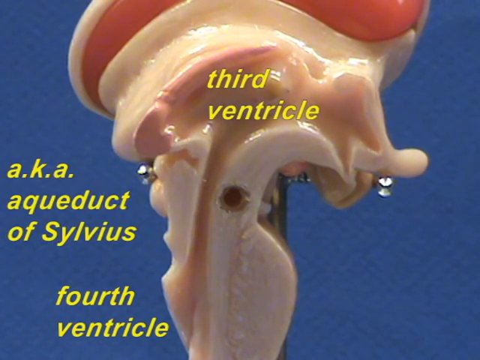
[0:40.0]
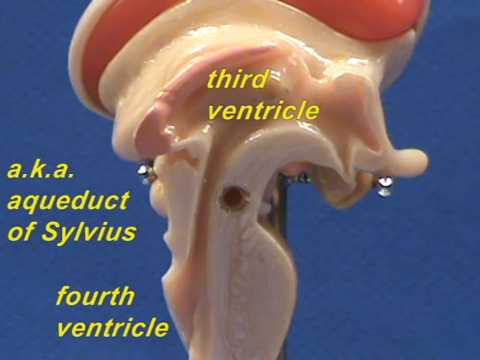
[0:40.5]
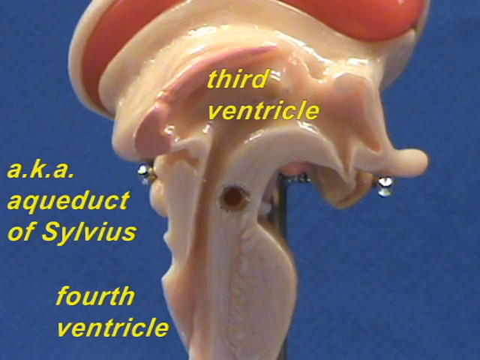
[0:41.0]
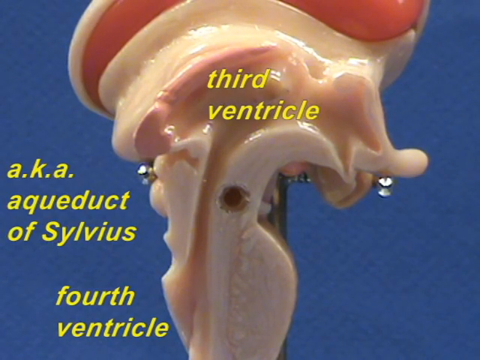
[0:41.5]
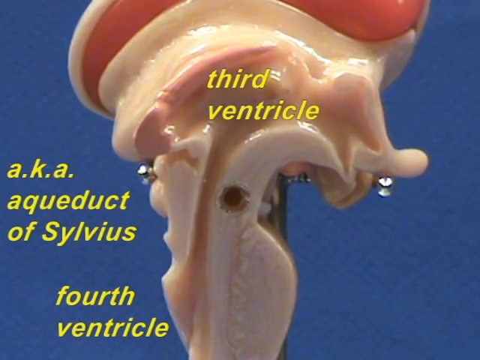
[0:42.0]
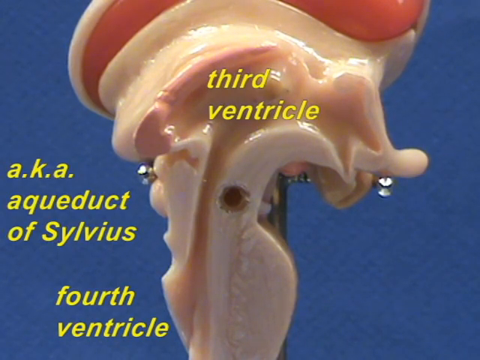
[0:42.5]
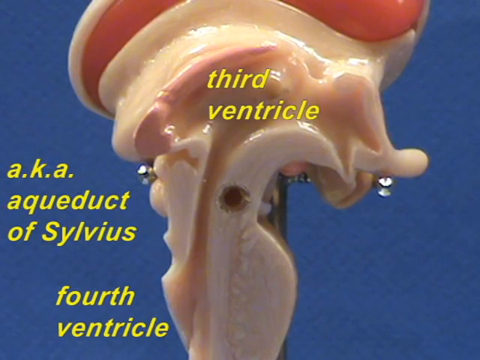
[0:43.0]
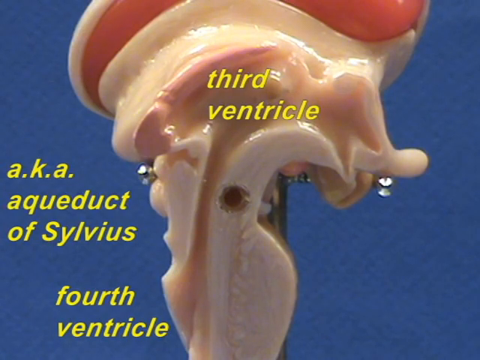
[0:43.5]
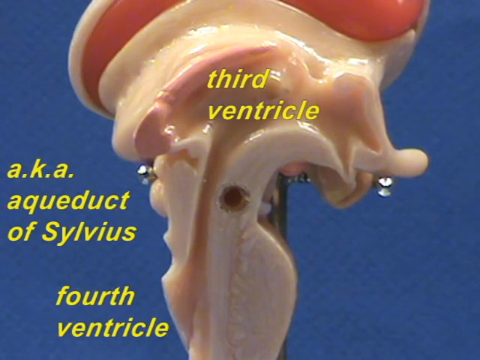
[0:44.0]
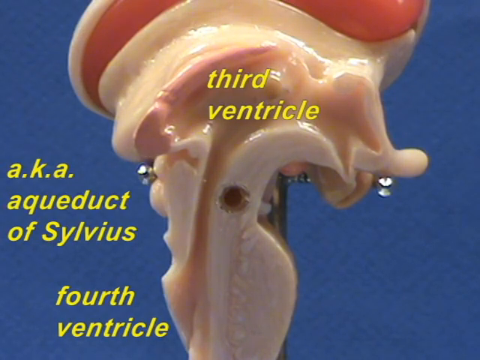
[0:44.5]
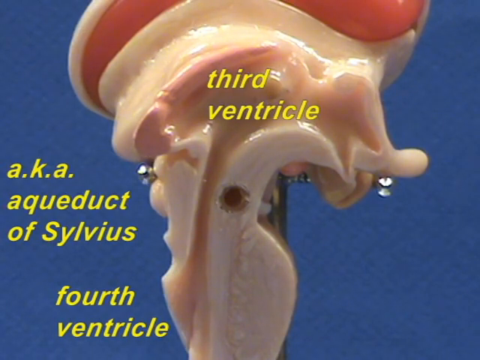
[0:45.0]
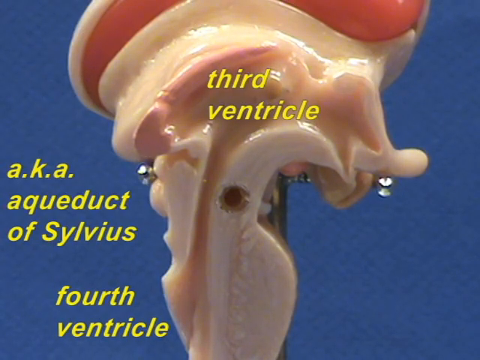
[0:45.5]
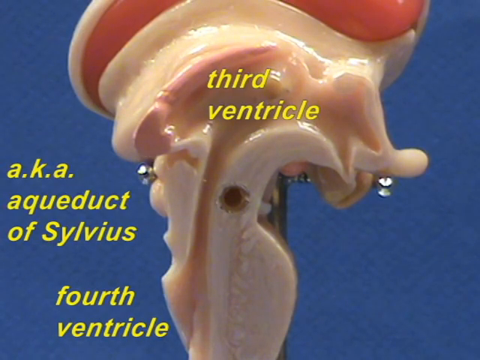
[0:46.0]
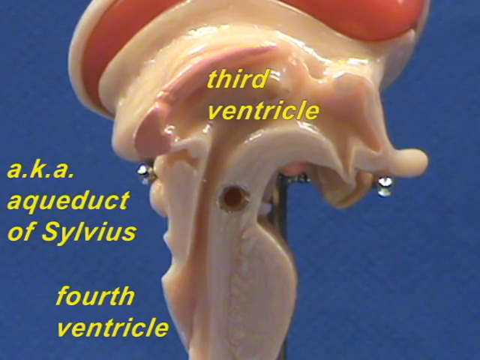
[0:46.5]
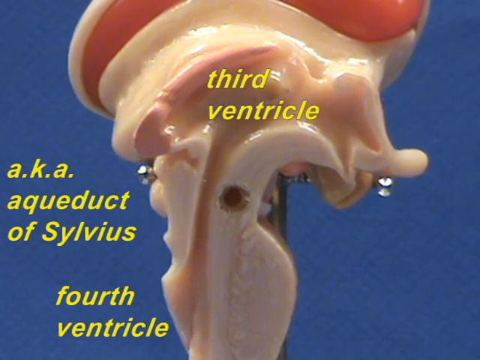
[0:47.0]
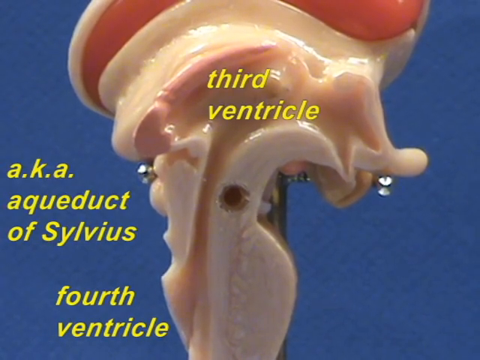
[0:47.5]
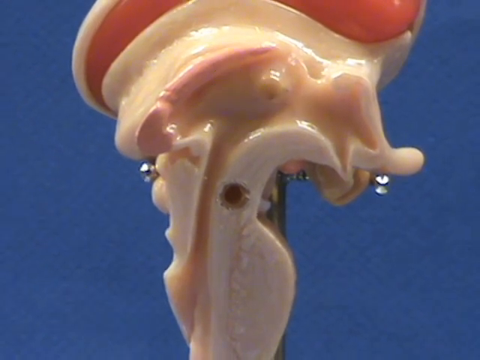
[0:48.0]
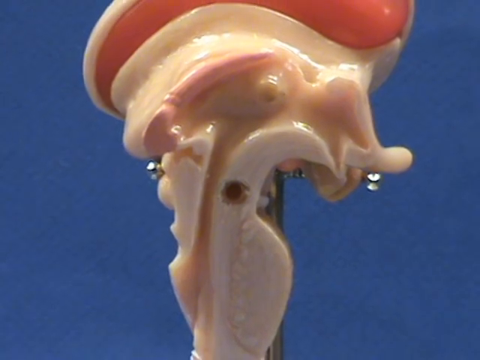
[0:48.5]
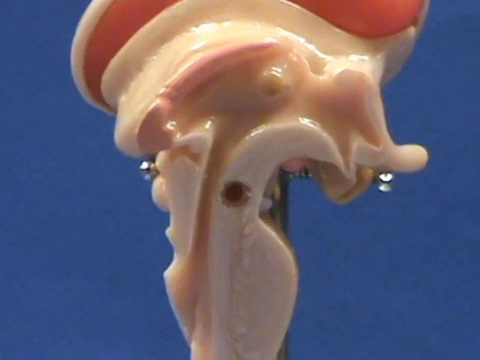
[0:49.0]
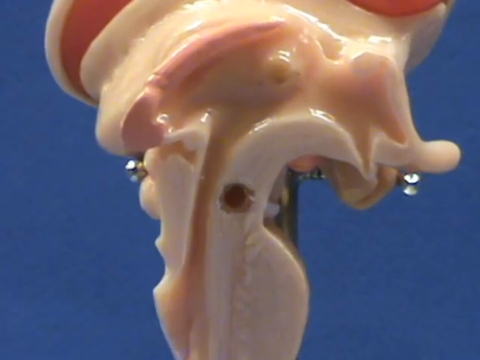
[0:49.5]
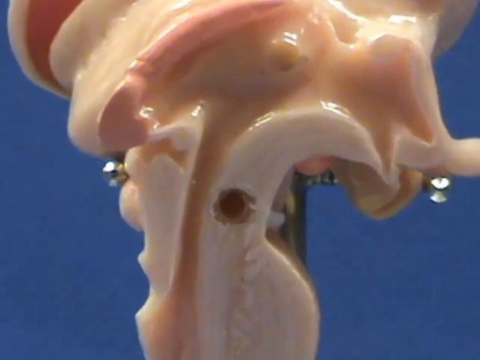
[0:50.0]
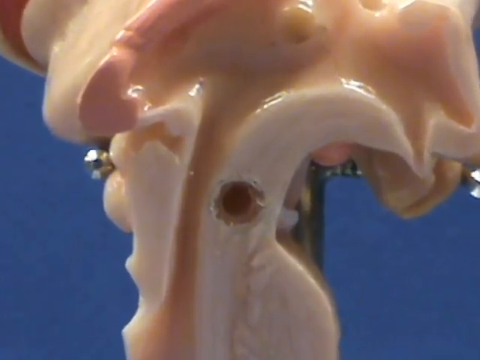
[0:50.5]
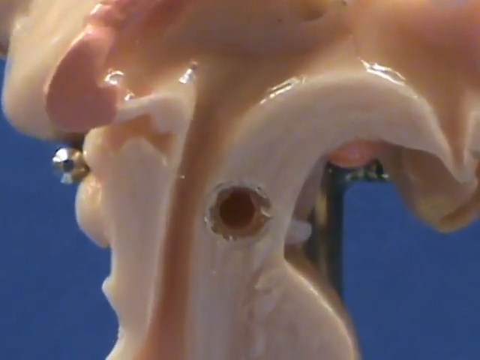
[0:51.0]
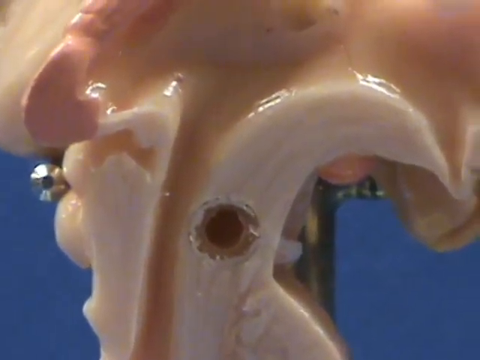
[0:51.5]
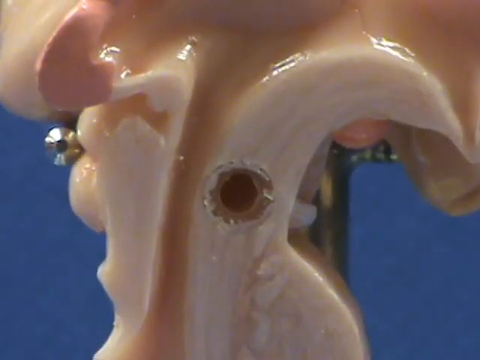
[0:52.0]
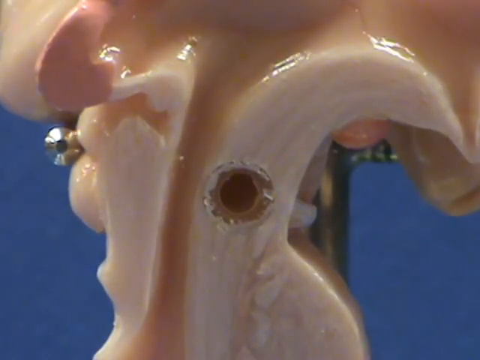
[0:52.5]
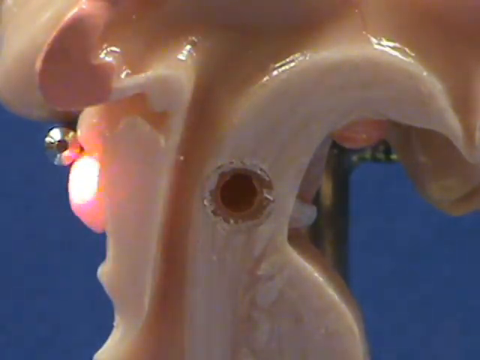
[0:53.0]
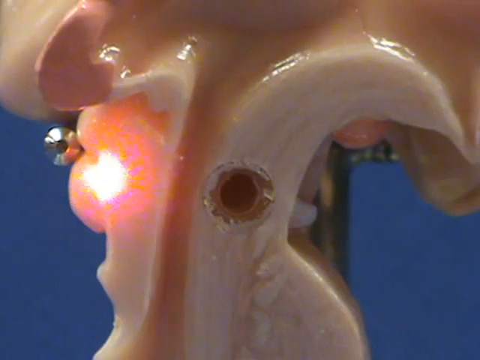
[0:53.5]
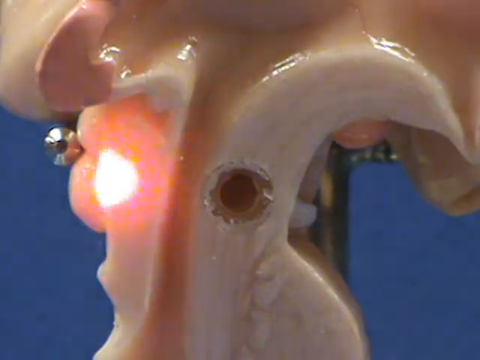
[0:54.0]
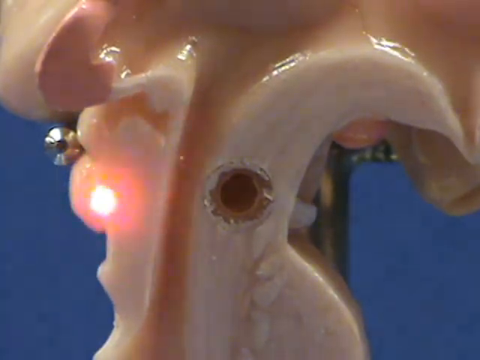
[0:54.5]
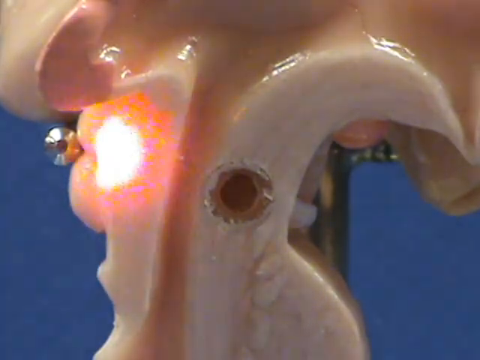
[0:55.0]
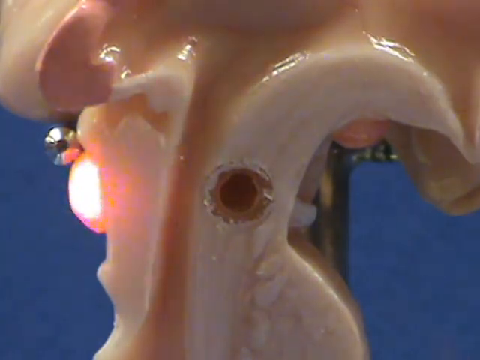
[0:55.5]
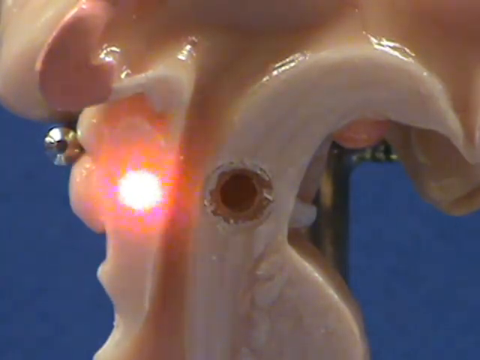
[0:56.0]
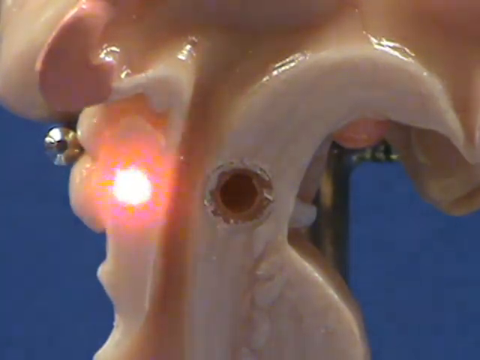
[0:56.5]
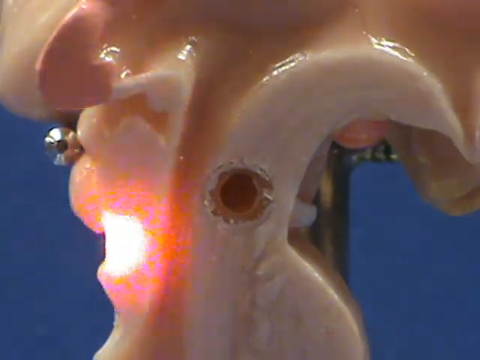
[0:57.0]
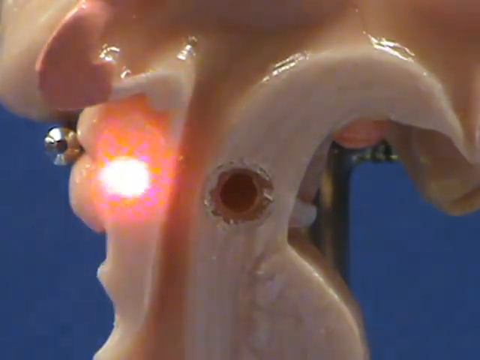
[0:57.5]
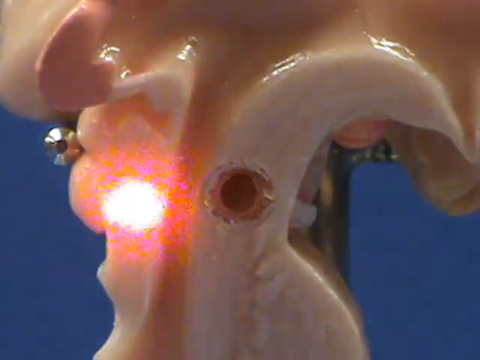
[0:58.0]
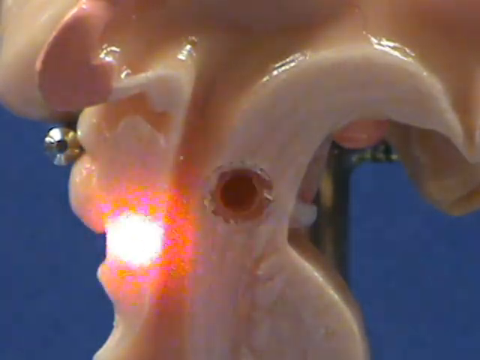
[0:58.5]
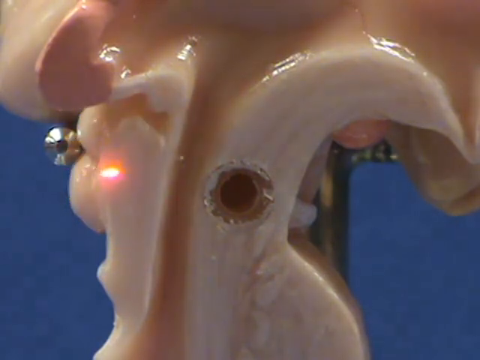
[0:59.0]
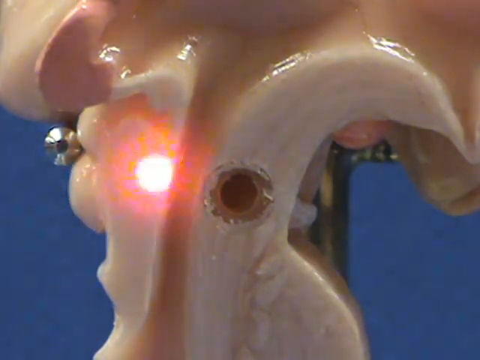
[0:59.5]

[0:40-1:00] Against the blue background is the device displaying a part of the human body. It is a fleshy color, with some parts a darker pink, and there is a hollowed-out area. A laser light appears to be used to point out the different parts, and text labels are on the screen. The camera zooms in and out repeatedly, shakes somewhat, and then zooms in a lot, apparently into the area with the hole, which does not look like part of the body but rather something from how the model was made. The light shines on two small bulbous parts that look like pimples with no head, possibly like skin tags. At the top of this bulb is another small hollowed-out area, and lower down the object is thicker and fleshy.